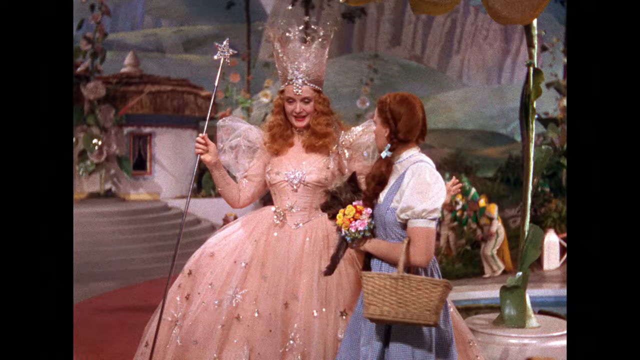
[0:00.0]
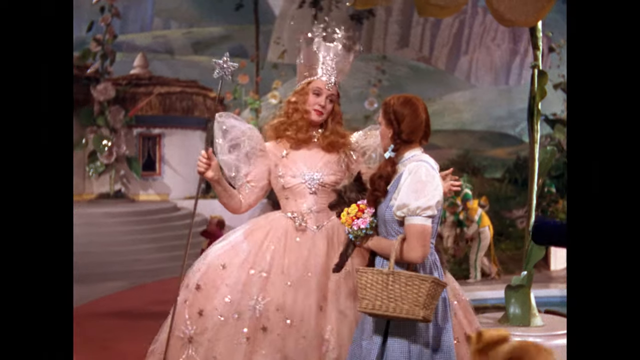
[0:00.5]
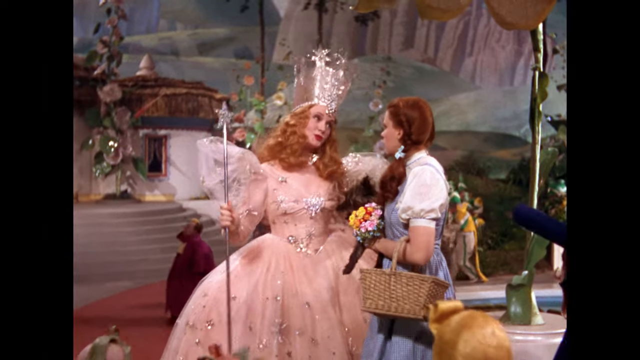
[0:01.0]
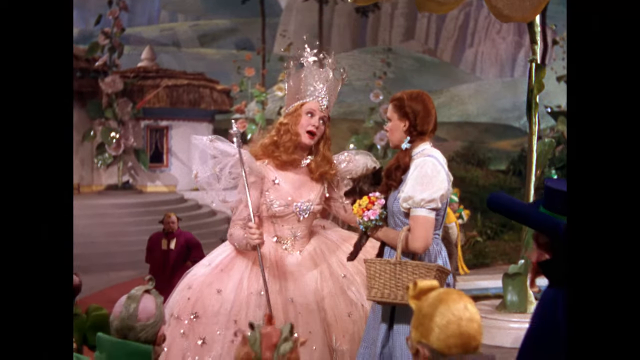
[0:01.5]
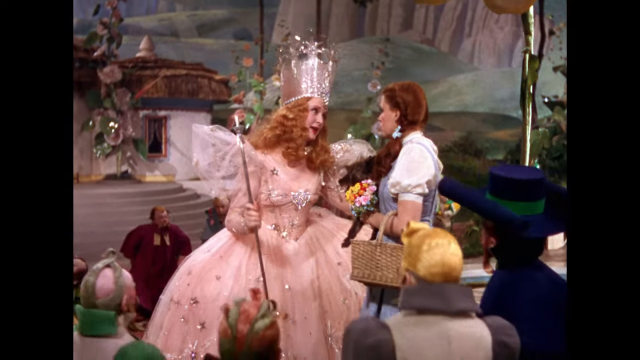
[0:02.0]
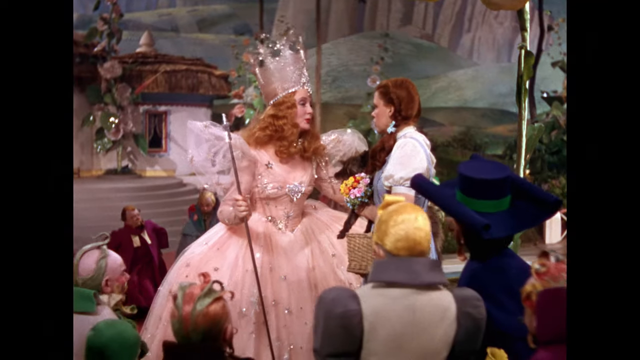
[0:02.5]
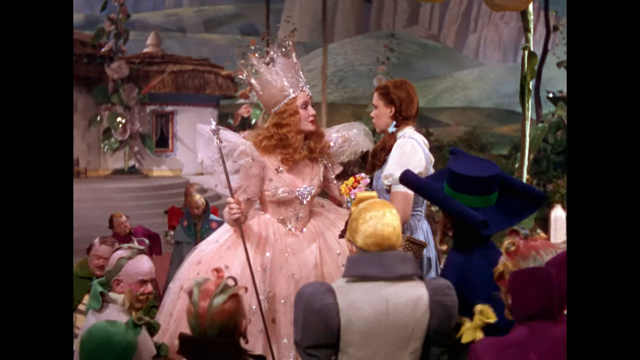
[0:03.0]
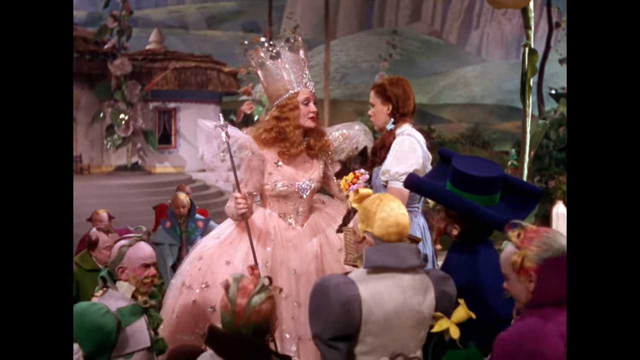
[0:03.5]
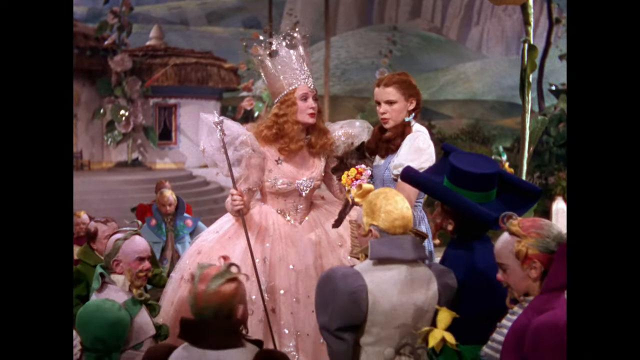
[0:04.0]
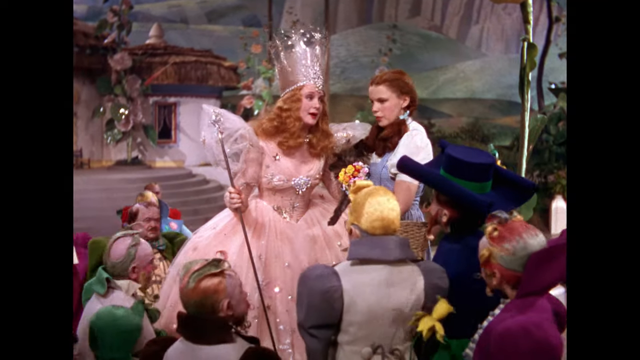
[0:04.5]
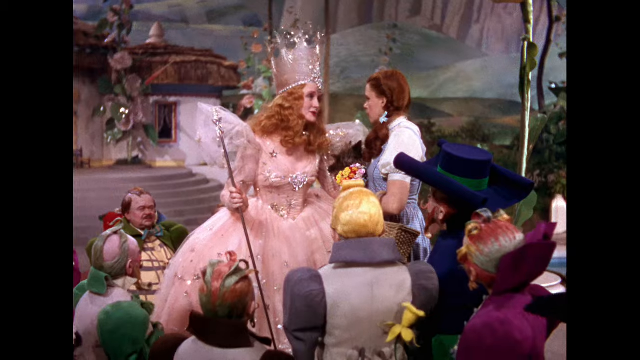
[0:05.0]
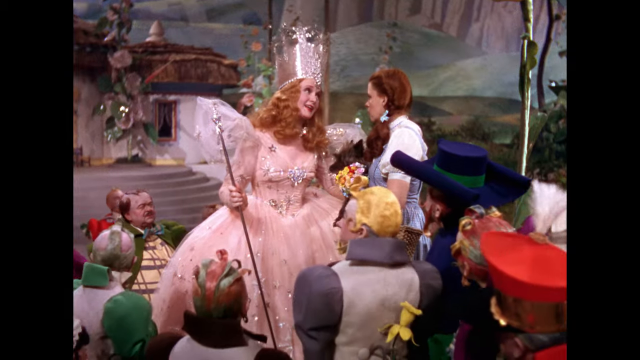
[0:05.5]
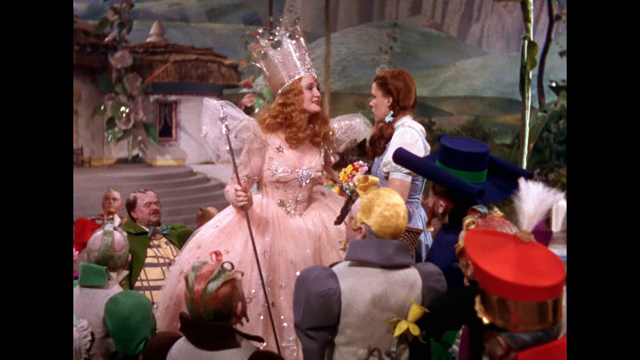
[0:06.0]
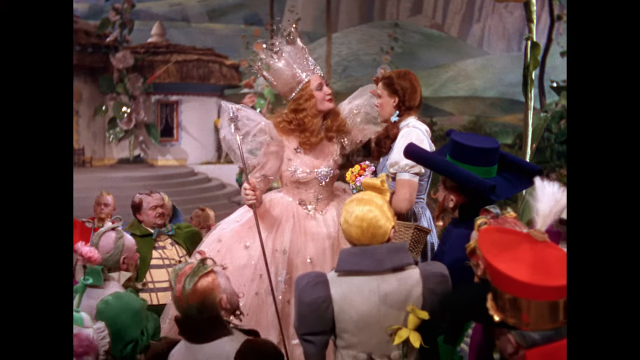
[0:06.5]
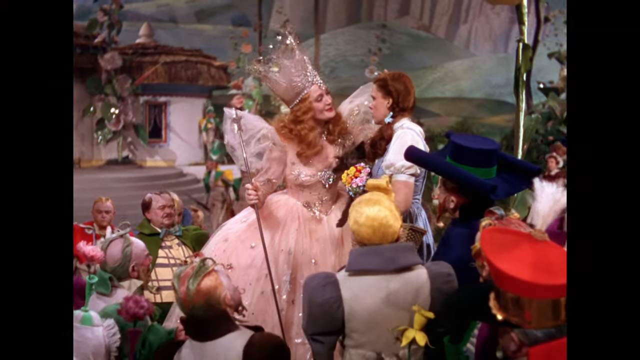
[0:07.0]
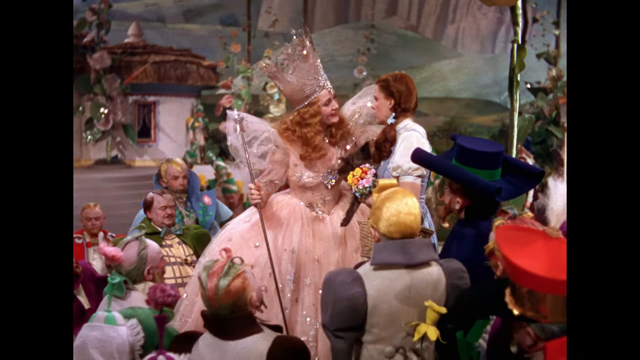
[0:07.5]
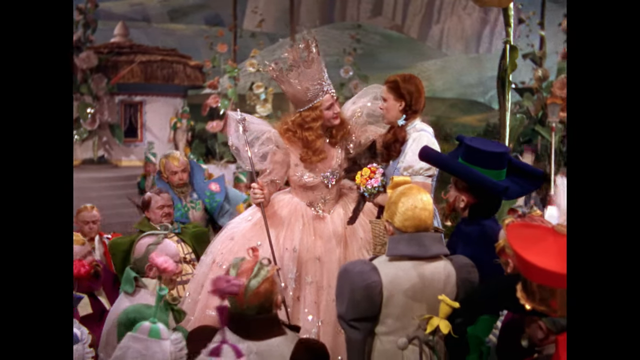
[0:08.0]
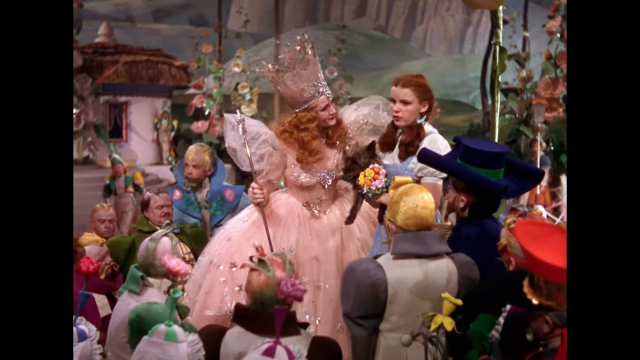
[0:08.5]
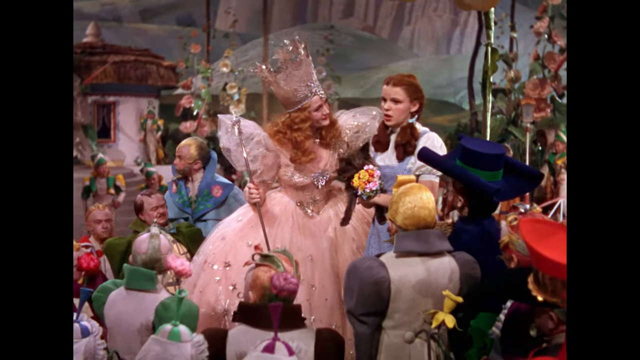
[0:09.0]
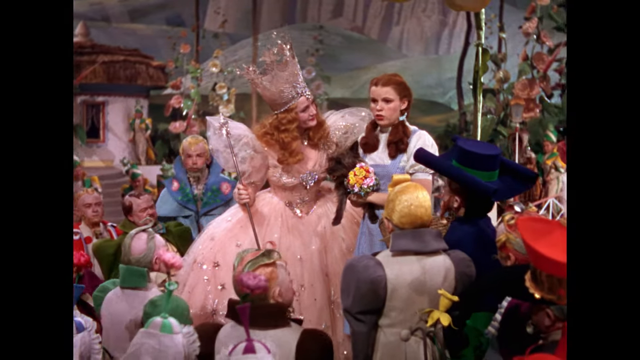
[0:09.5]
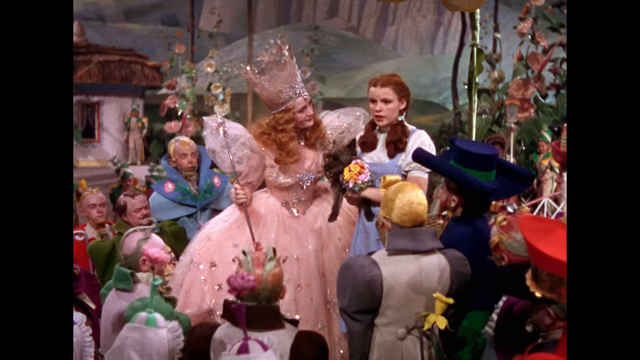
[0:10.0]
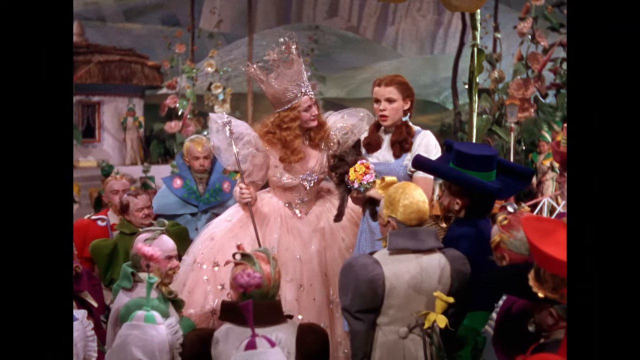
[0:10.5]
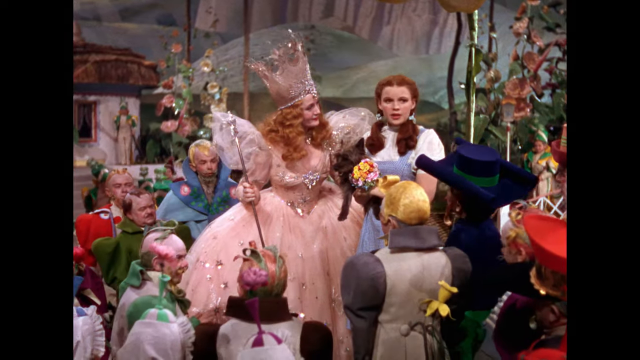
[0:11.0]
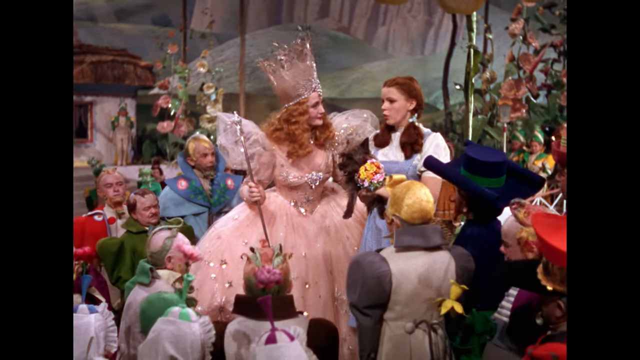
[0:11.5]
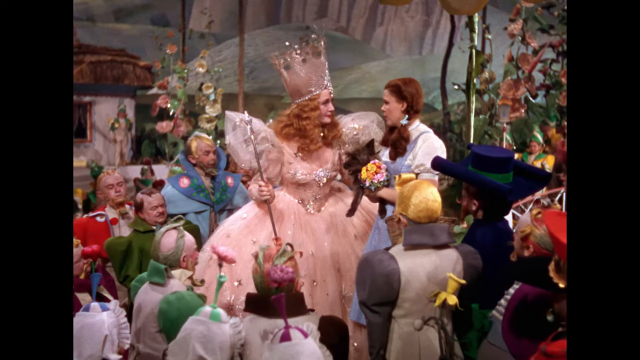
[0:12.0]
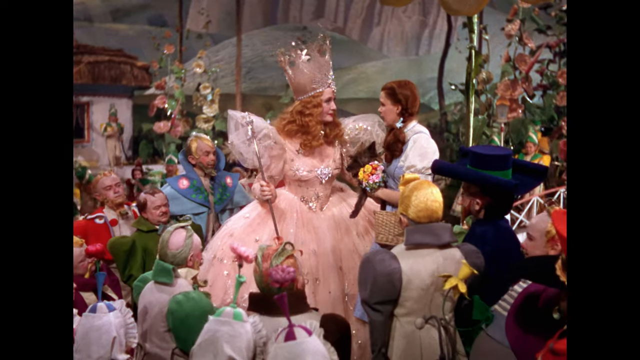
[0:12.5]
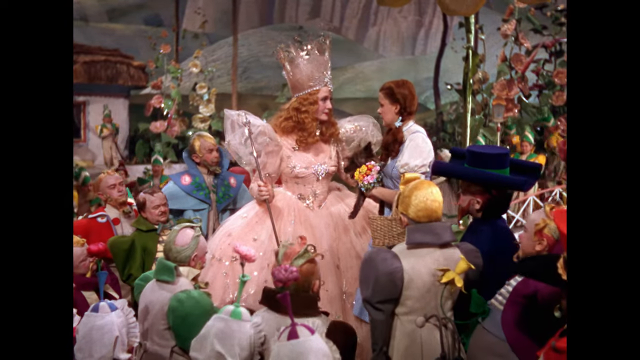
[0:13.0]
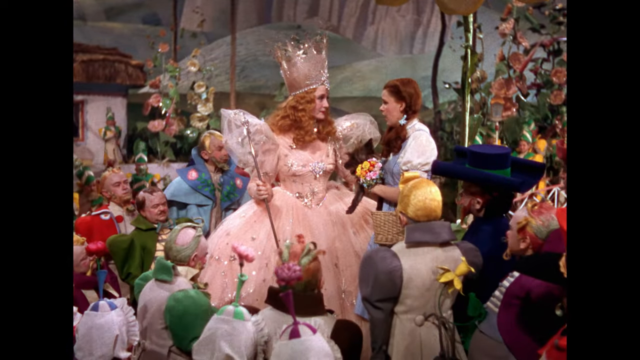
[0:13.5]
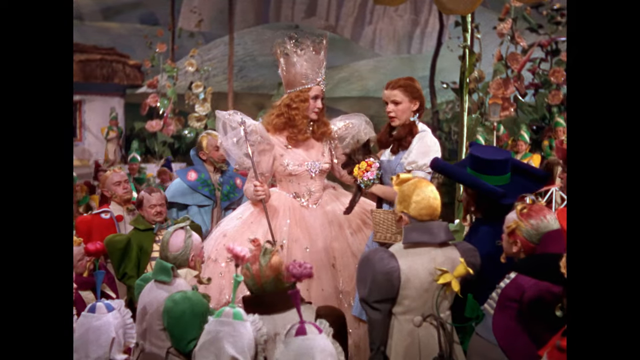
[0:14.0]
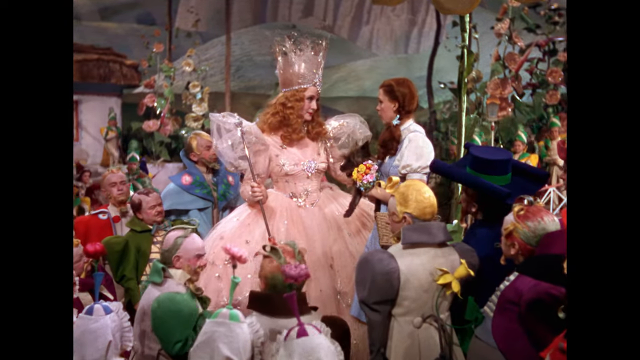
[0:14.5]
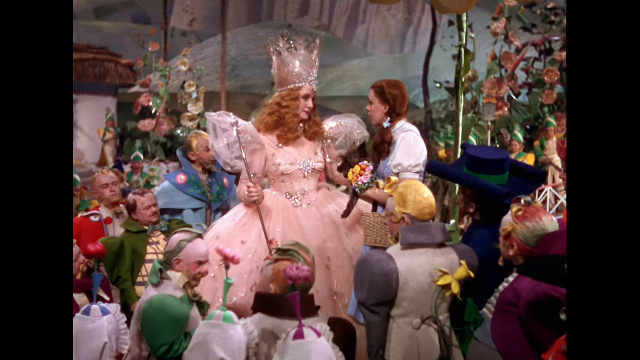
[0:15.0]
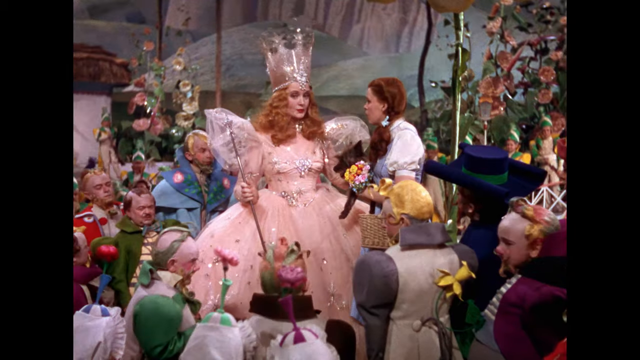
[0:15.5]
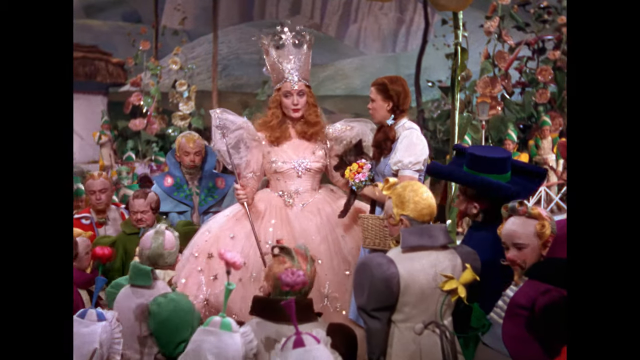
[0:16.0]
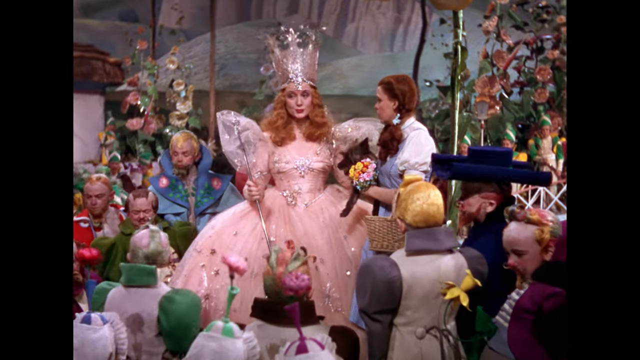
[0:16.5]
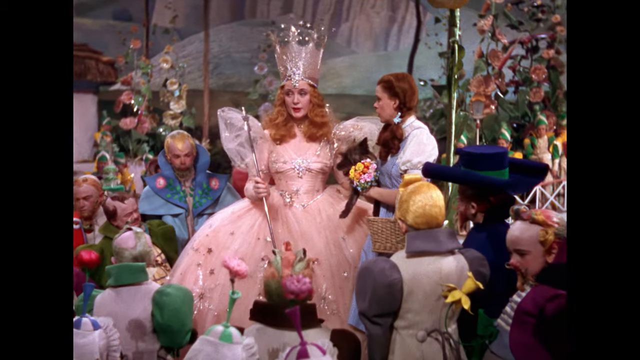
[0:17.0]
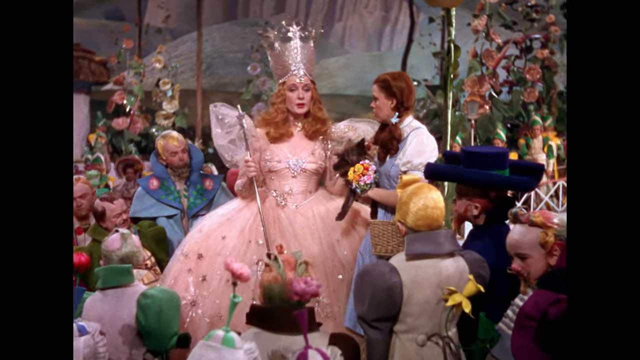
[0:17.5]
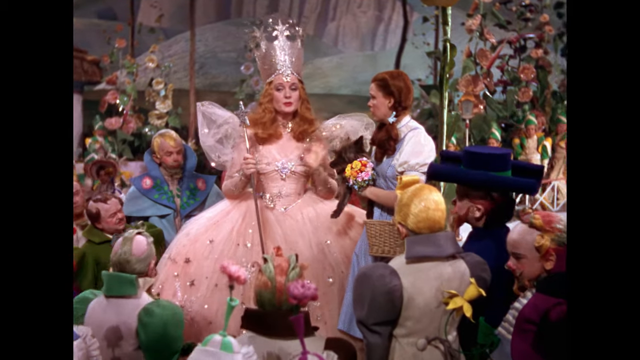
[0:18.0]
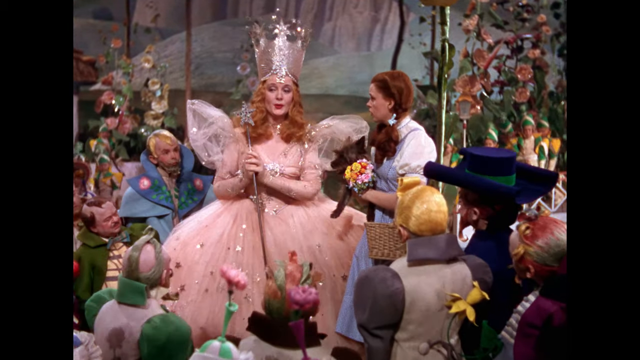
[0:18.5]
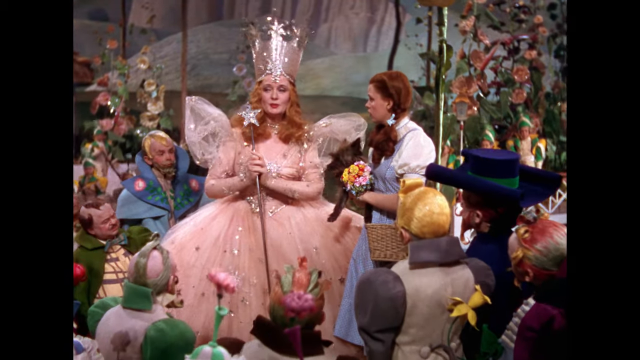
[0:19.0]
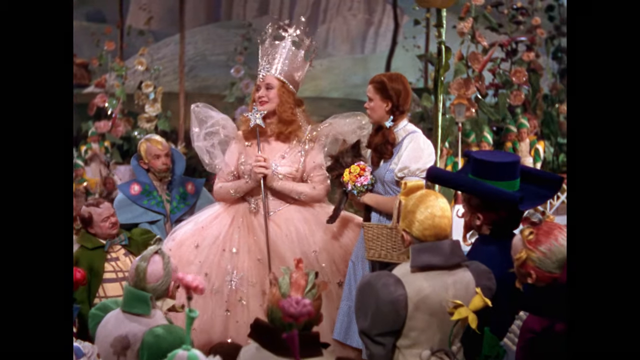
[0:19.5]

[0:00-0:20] A scene from the film The Wizard of Oz, featuring Judy Garland, shows the fairy godmother and Dorothy standing together. The fairy godmother wears a light pink, peach-colored dress with sparkly highlights around the dress and on her chest and sleeve, a large crown, and holds a wand with a long stick and a bright silver star at the top. Dorothy wears a white top with a puffy sleeve and a blue dress, and holds her dog Toto, a small black dog, in her arms. She also holds a small bouquet of flowers and has a brown picnic basket over her elbow. The fairy godmother leans down a bit to face Dorothy as she speaks to her. A large crowd of Munchkin people approaches Dorothy and the fairy godmother and seems to form a circle around them. The fairy godmother keeps looking at Dorothy while speaking; she clears away some hair on her head and appears to push it back. Dorothy turns so that she faces the crowd in front of her, with a somewhat concerned look, shaking her head a little as she speaks, then turns back to the fairy godmother. The fairy godmother turns to the crowd and begins speaking, and some people in the crowd nod their heads in agreement.